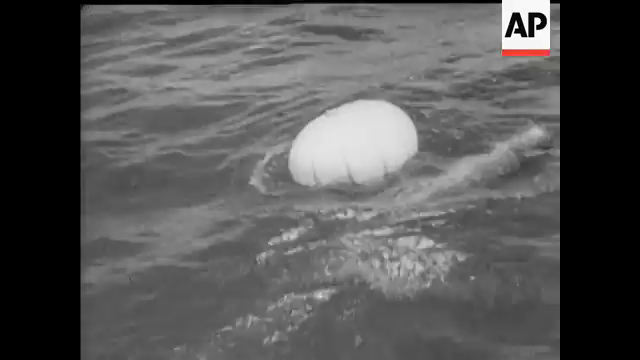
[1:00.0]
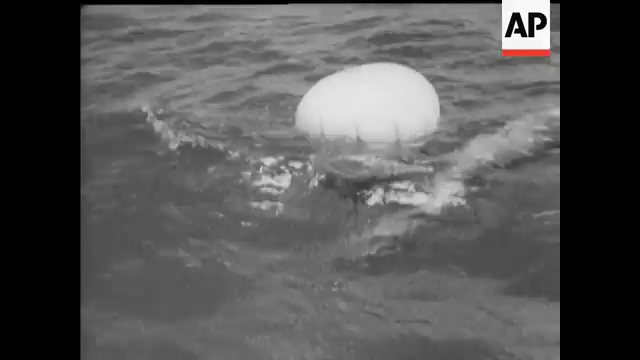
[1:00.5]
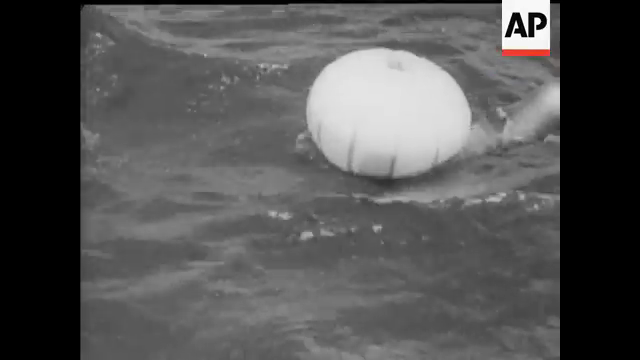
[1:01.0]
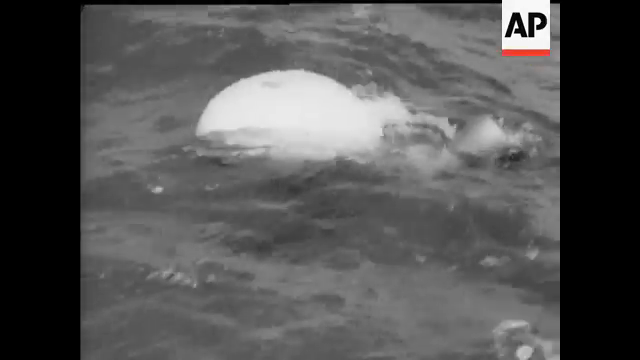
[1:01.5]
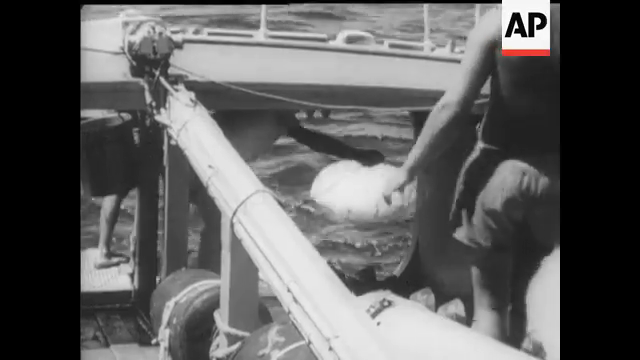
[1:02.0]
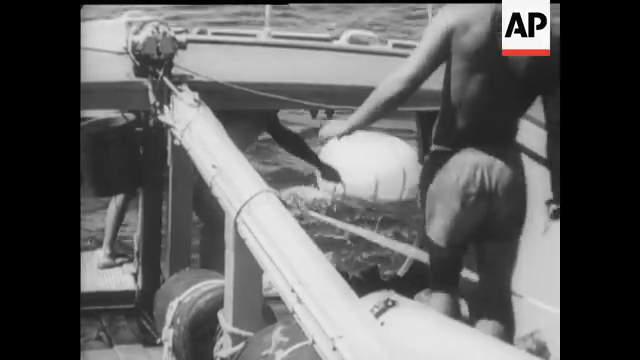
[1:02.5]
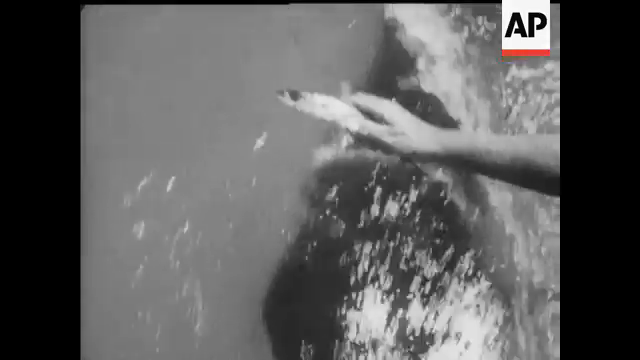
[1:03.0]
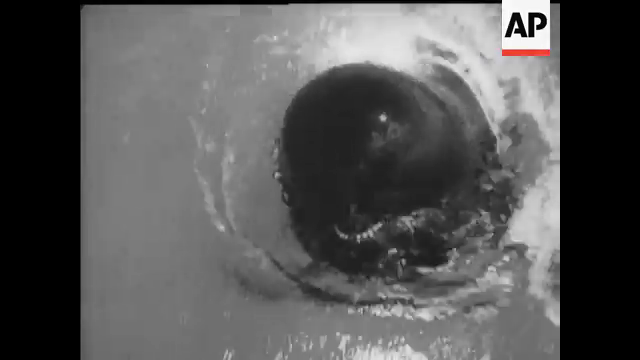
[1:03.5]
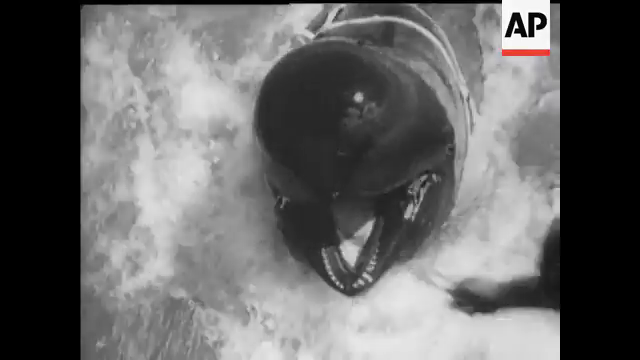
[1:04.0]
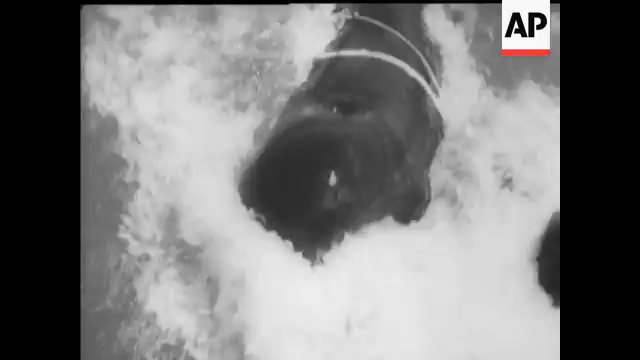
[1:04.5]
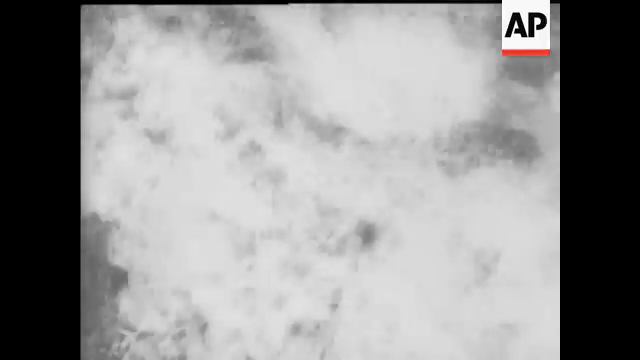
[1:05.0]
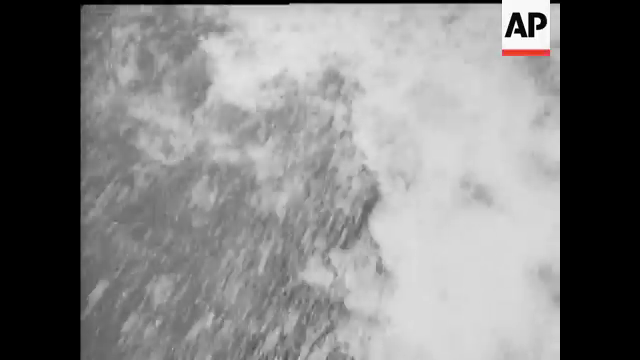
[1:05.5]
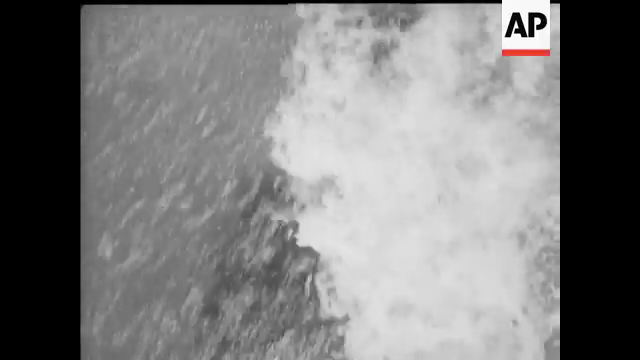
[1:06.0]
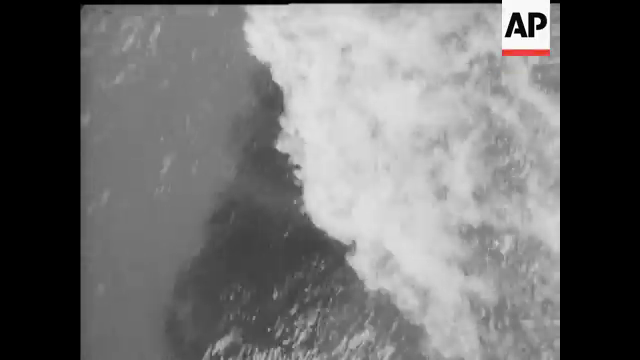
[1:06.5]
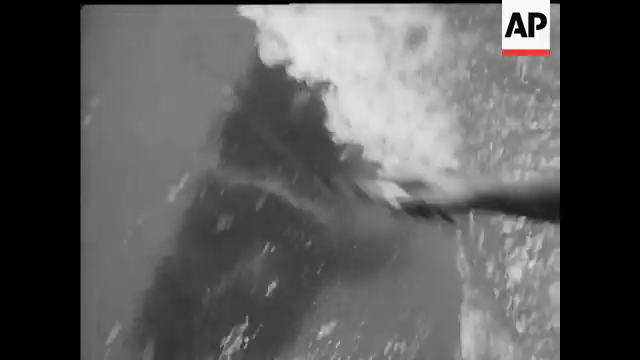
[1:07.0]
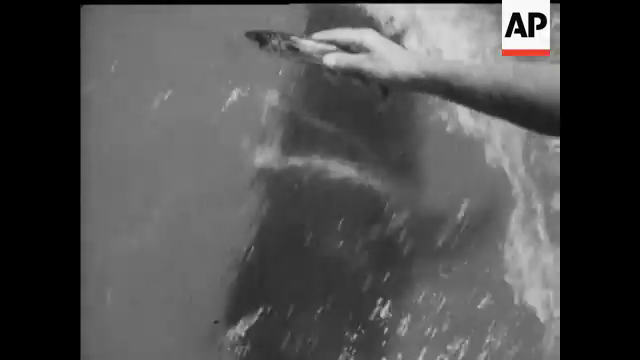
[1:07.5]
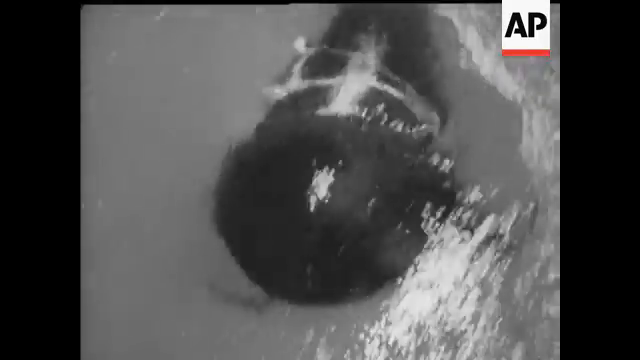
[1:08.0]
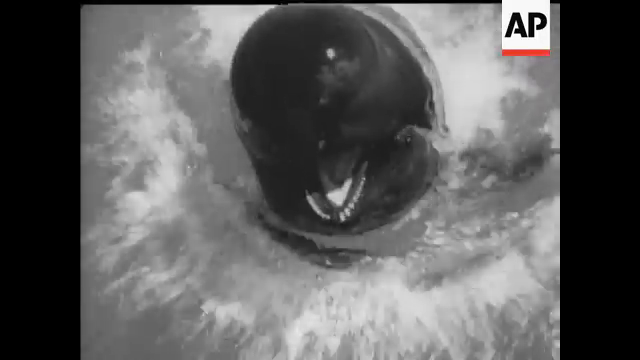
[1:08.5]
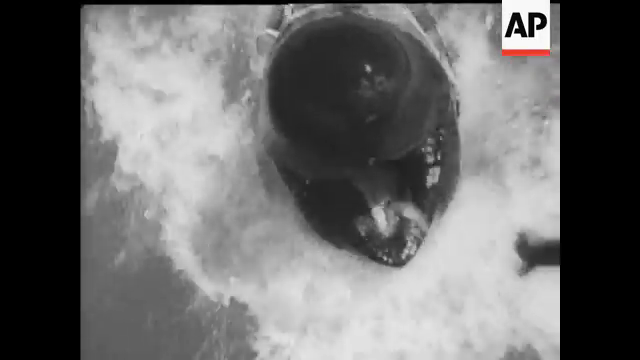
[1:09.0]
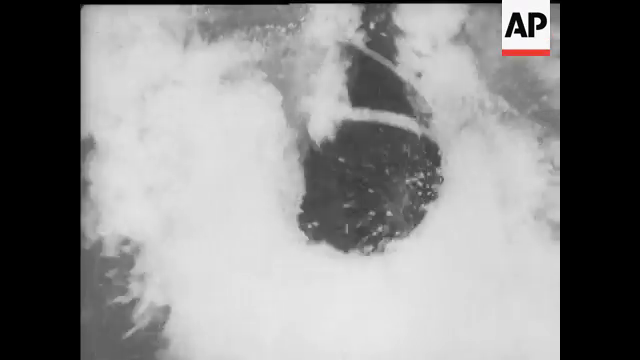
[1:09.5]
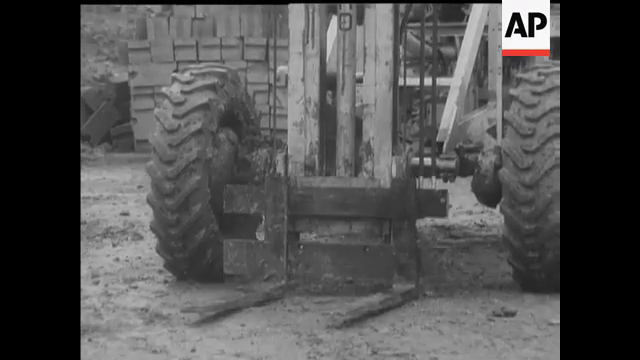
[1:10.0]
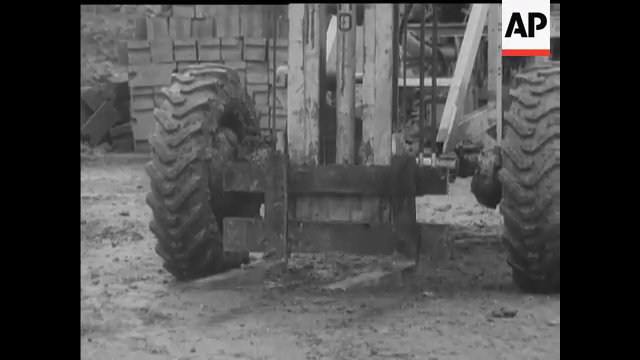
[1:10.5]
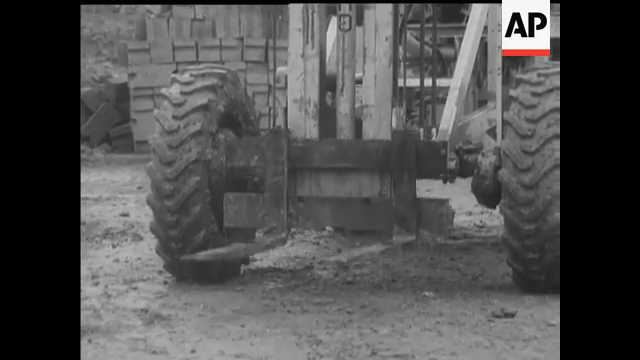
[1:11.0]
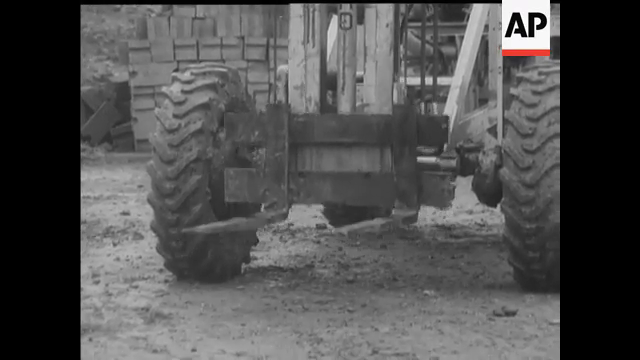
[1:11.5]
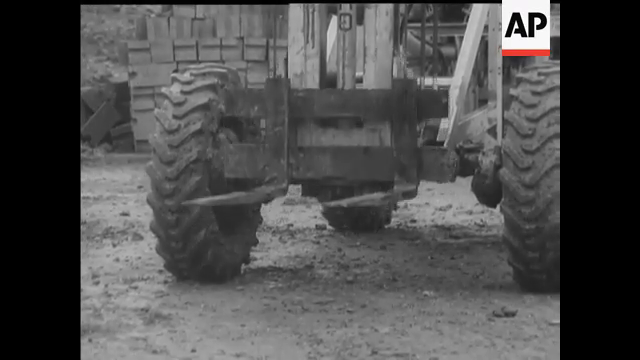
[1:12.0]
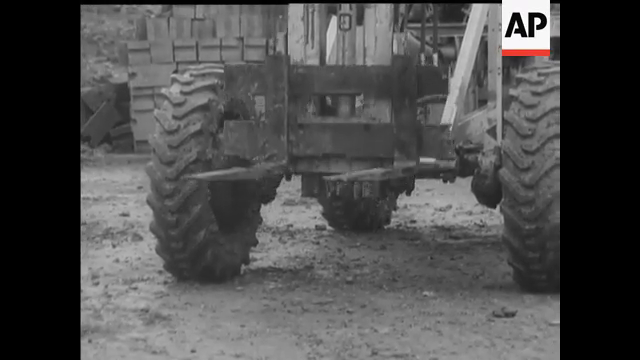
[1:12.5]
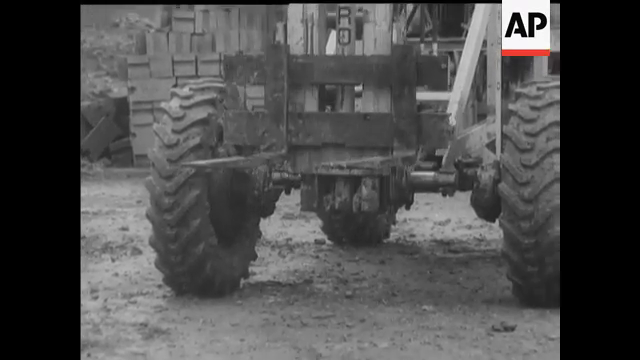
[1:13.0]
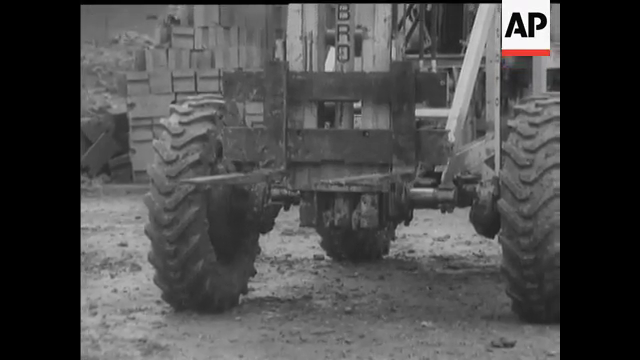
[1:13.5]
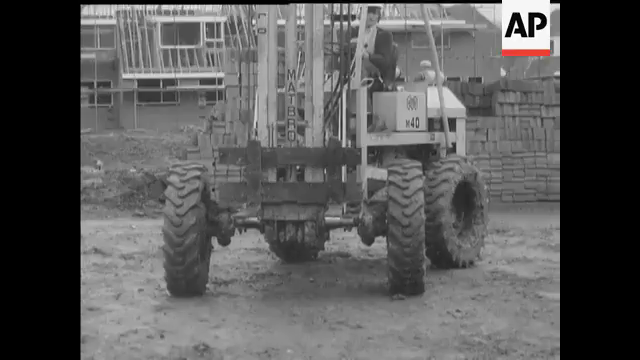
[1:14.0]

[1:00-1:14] Black and white footage from AP, with the AP icon in the top right, shows what looks like a white balloon at the top of the sea, floating around. A shot from a ship looks at the white balloon, with two sailors visible: a sailor on the right wearing shorts walks toward the balloon holding some sort of straight tool, while another sailor closer to the front of the boat, near the balloon, reaches out to it. A top-down view then shows a black beluga whale swimming through the water. It raises its head out of the water and opens its mouth, and one of the sailors throws a fish into its mouth before it goes back underwater. The sailor extends his right hand holding a fish; the whale pops its head back out of the water and opens its mouth, and the sailor throws in another fish. Next comes a device with two large rubber tires on the left and right sides, which appears to be some type of crane, with a forklift section moving up between the center of the tires. A longer shot shows it from the front: three of the four tires are visible, with the forklift in the center of them, and a building with different brick walls behind it.